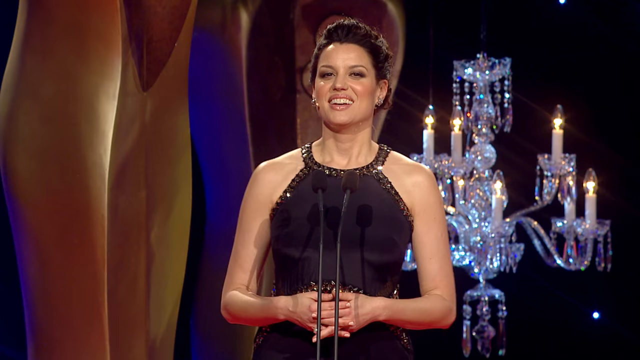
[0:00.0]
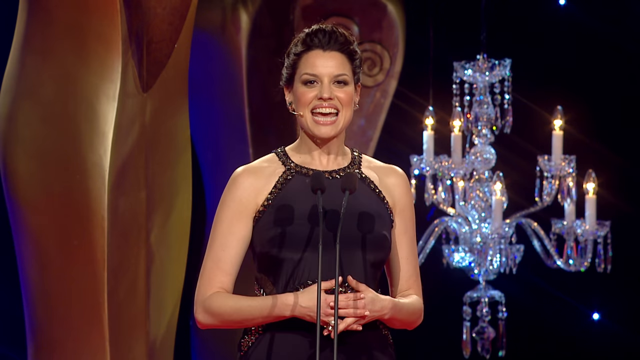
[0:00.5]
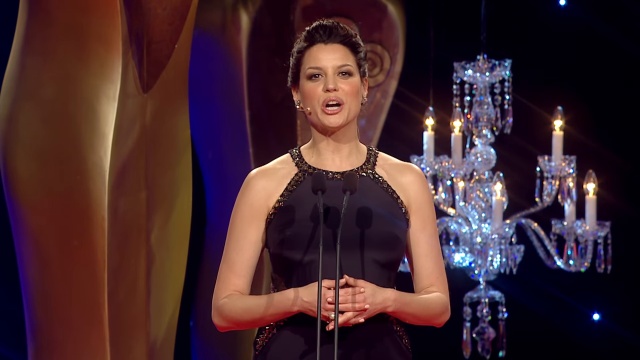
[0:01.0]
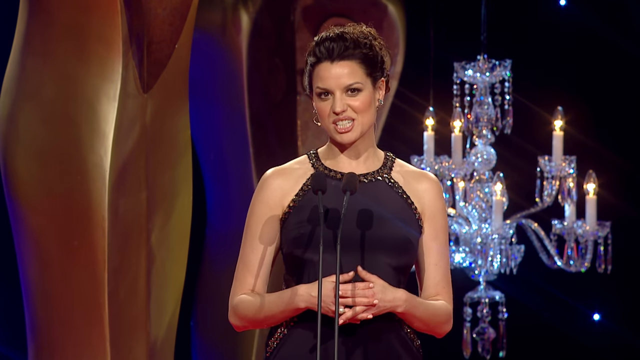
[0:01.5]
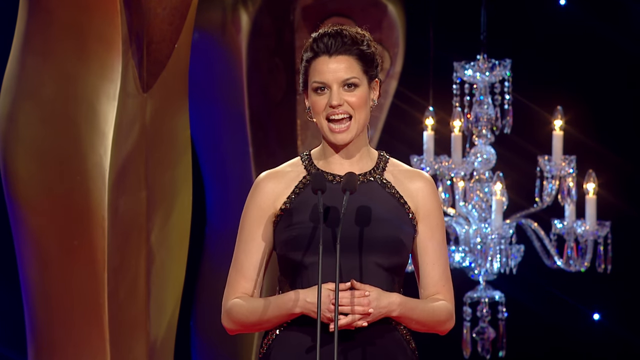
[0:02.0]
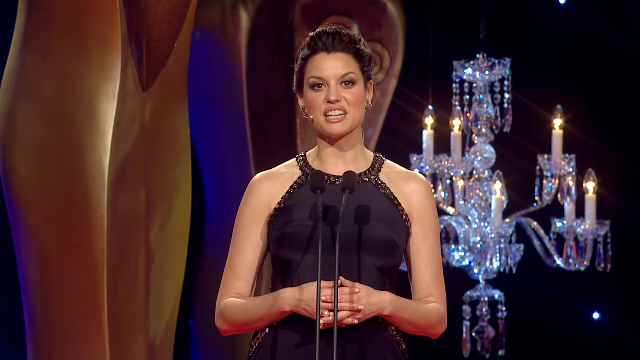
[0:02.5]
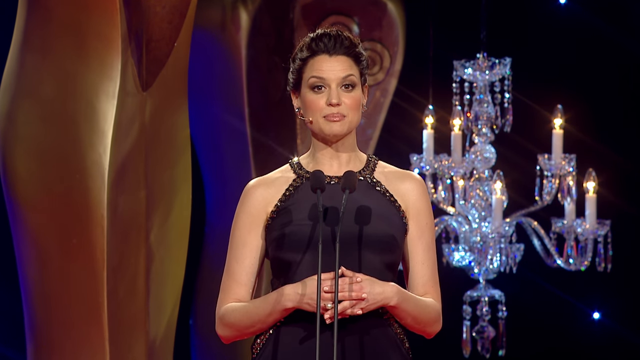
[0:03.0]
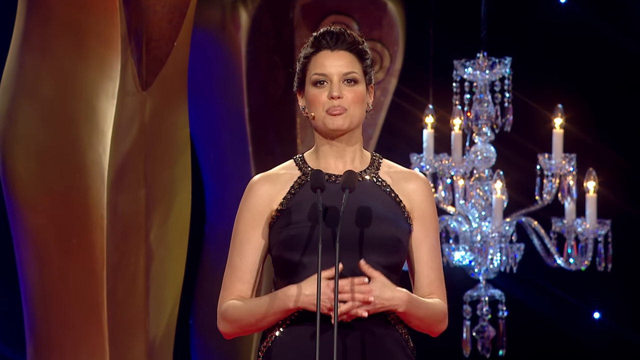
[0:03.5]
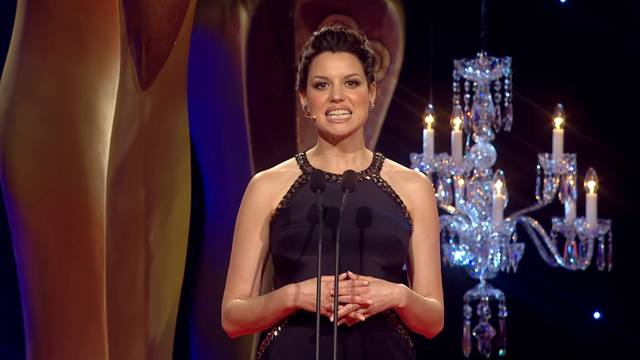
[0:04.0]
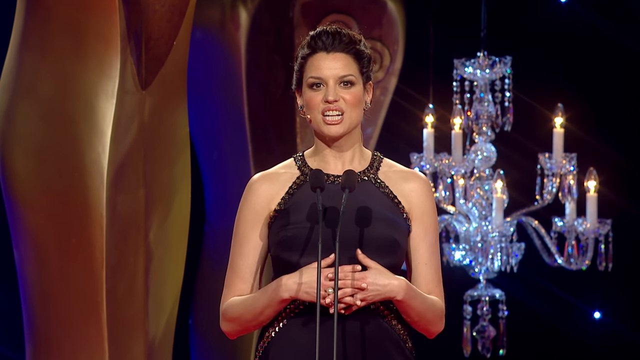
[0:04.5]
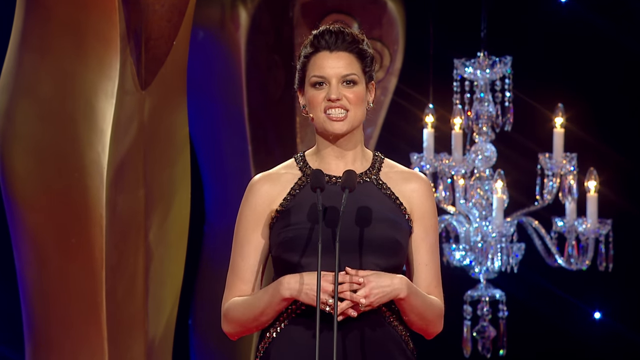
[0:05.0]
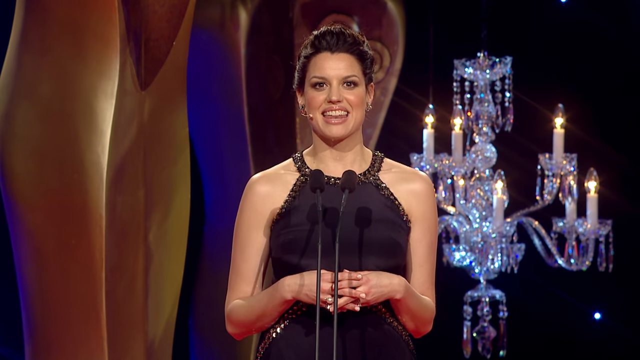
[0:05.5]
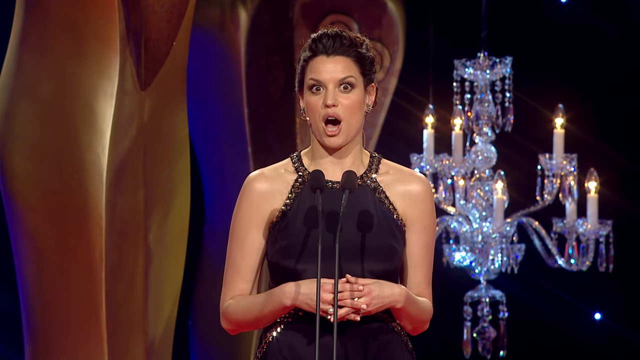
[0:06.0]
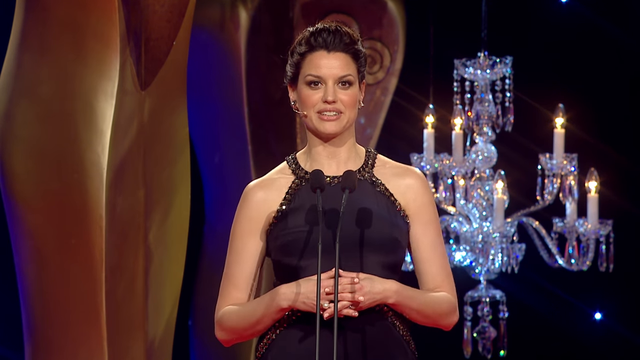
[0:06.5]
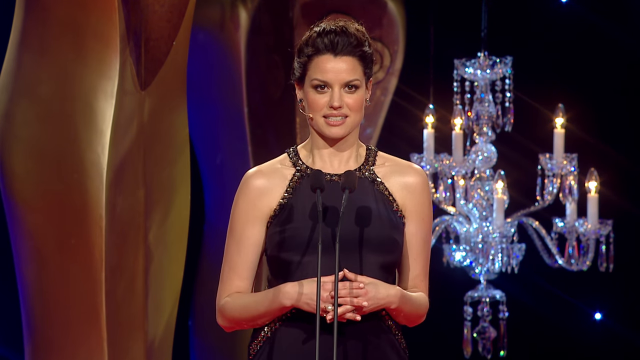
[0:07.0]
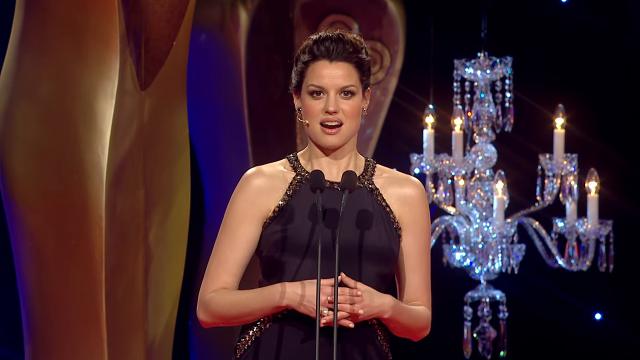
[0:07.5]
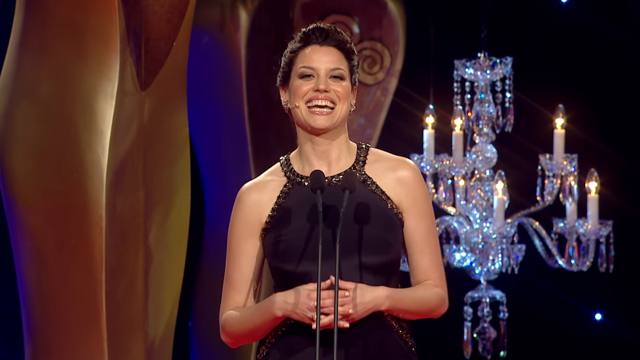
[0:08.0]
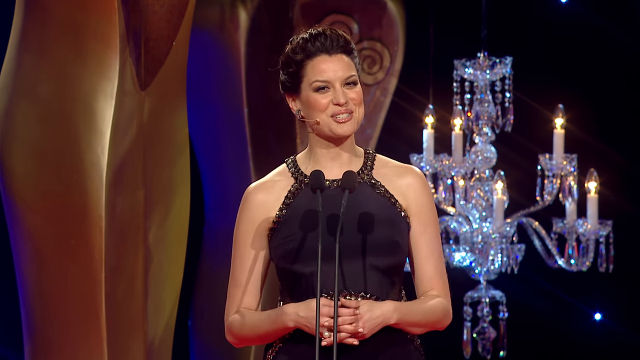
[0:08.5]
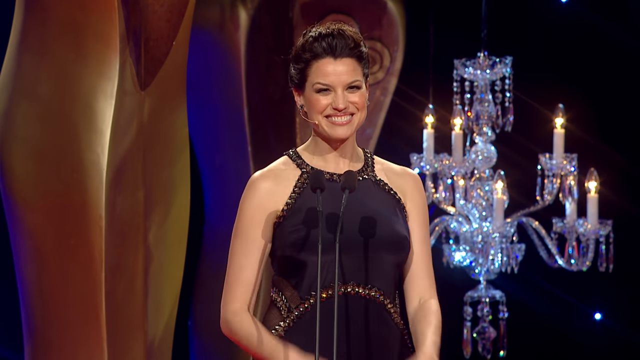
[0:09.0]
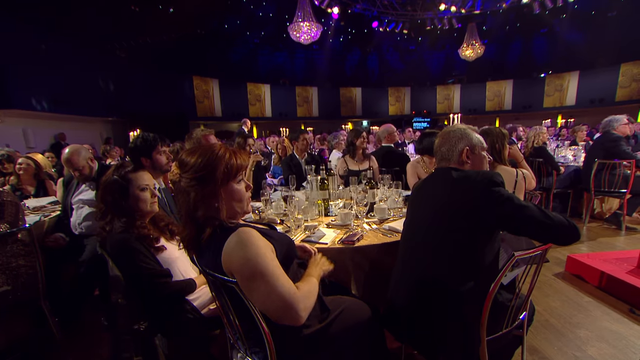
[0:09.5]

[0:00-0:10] A woman who appears to be at an award show wears a black dress. Behind her is what looks like a crystal chandelier with candles, and to the right of the screen is something brownish-blue and wavy. She is speaking, possibly to an audience, and acts very happy. The camera then pans out to the audience, who apparently applaud for her.